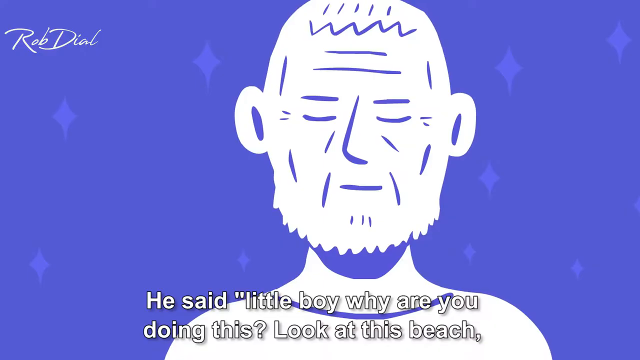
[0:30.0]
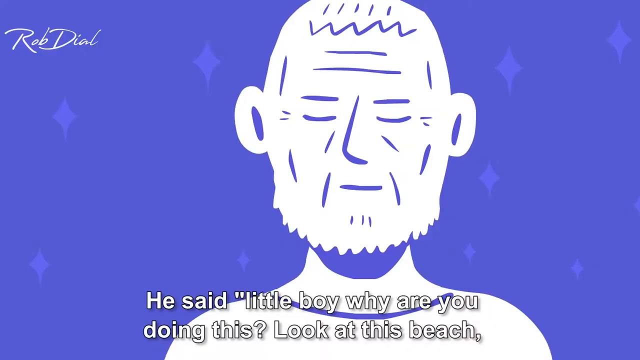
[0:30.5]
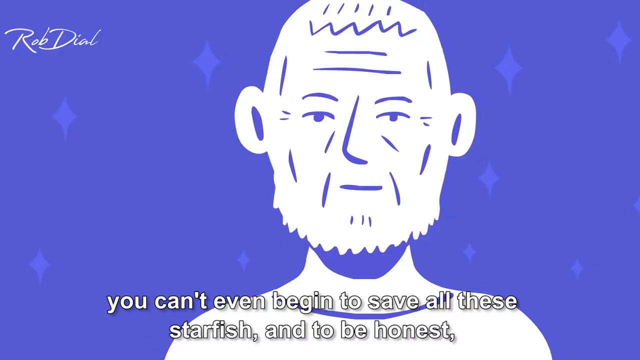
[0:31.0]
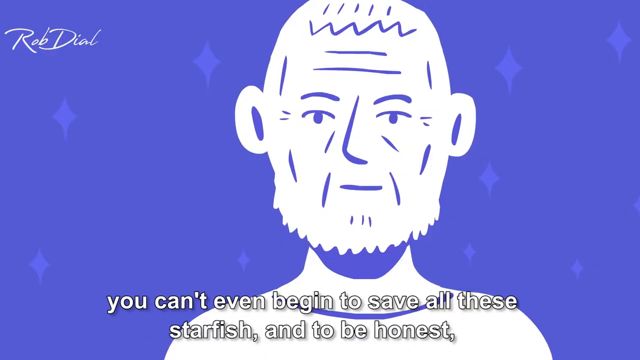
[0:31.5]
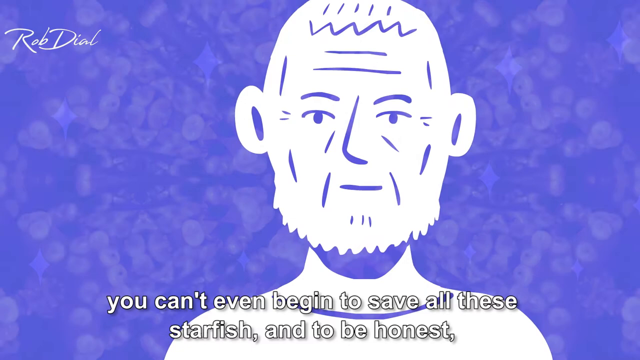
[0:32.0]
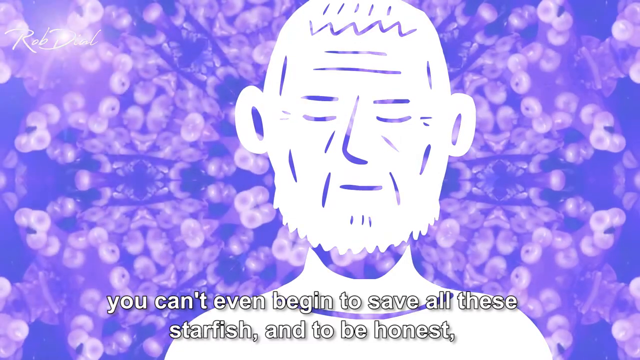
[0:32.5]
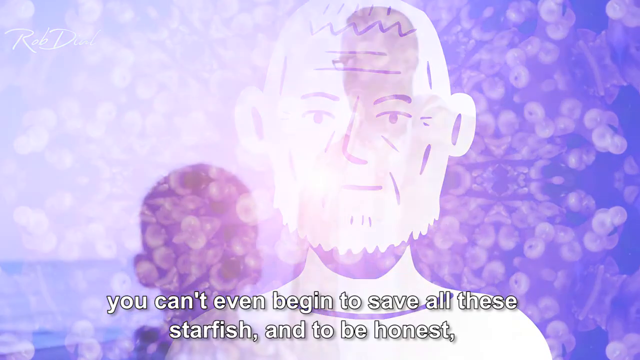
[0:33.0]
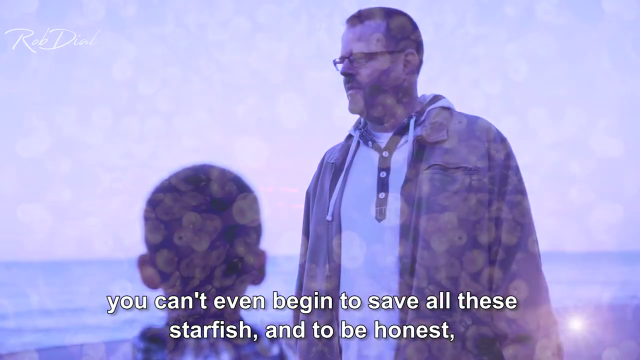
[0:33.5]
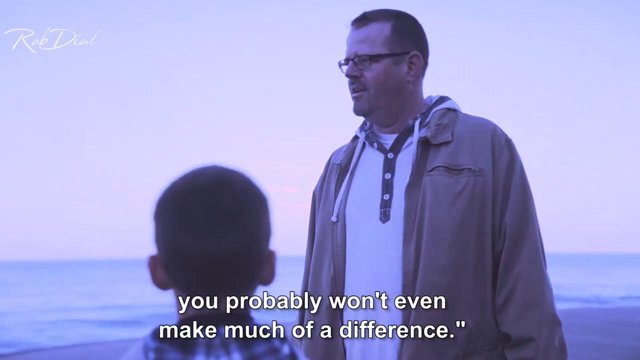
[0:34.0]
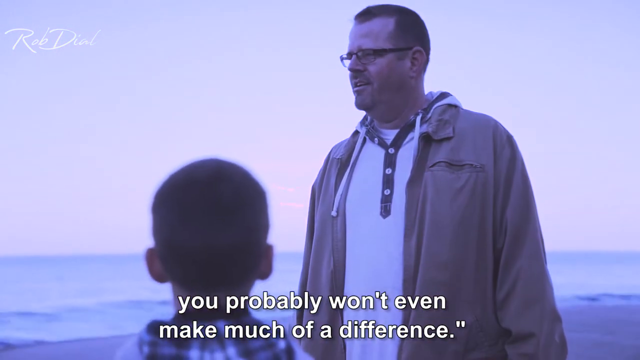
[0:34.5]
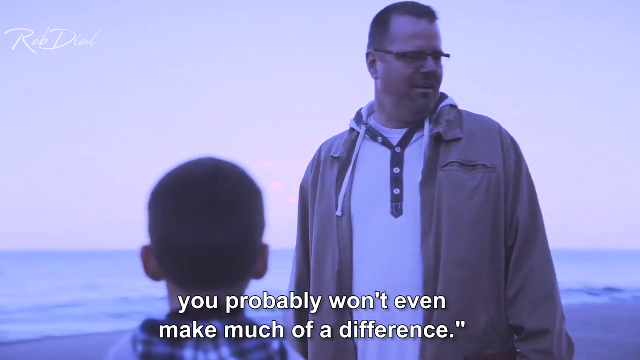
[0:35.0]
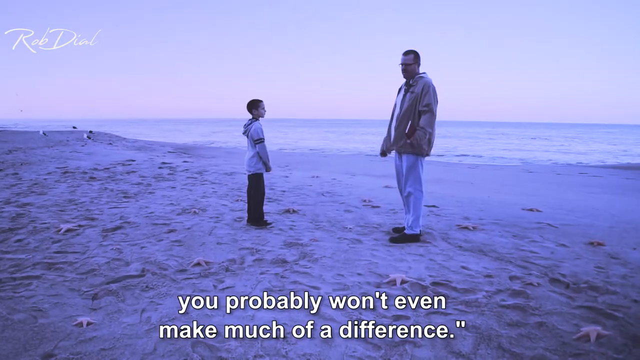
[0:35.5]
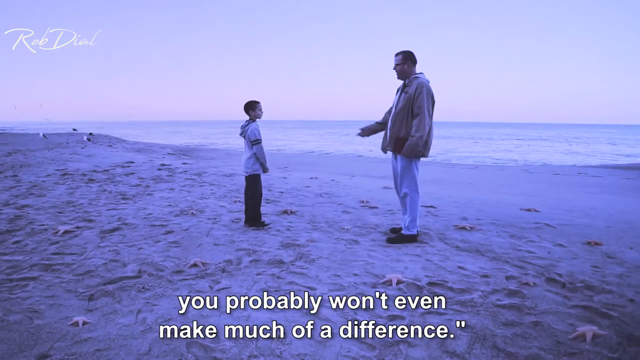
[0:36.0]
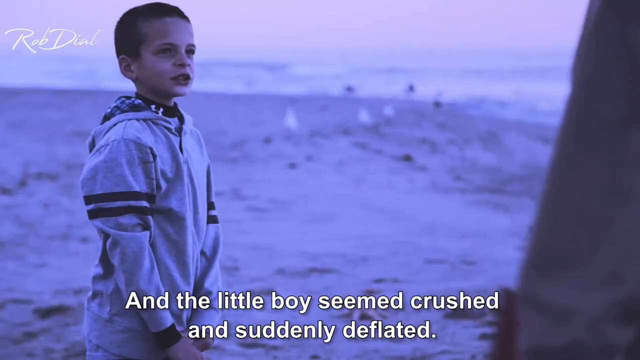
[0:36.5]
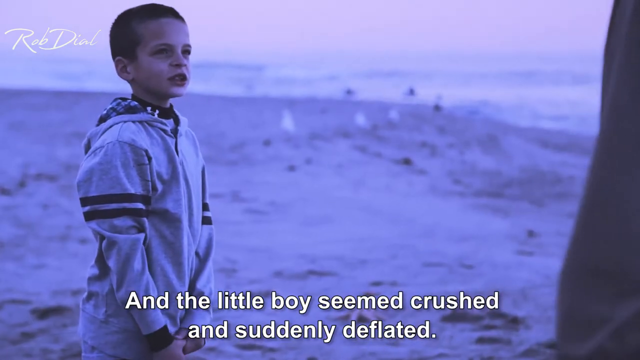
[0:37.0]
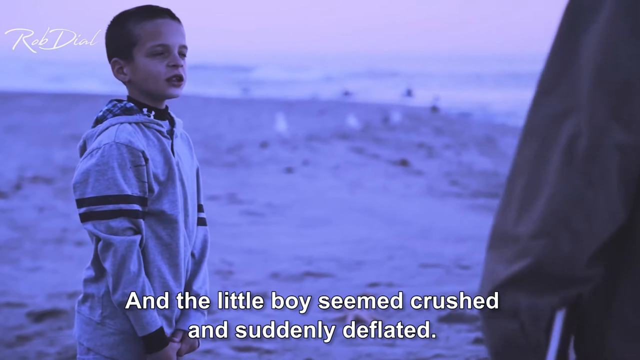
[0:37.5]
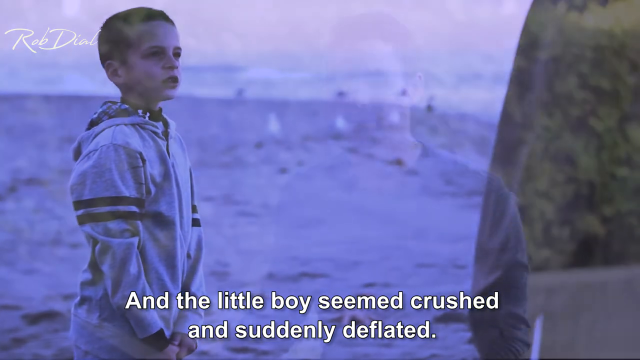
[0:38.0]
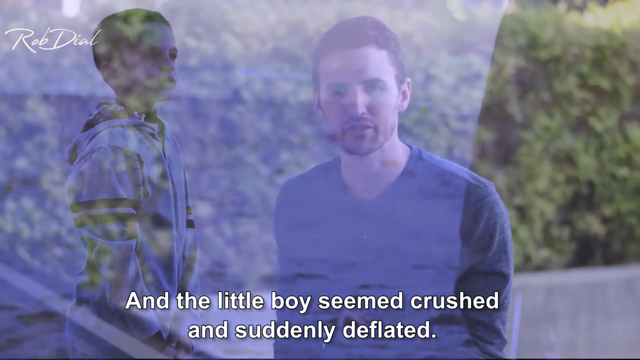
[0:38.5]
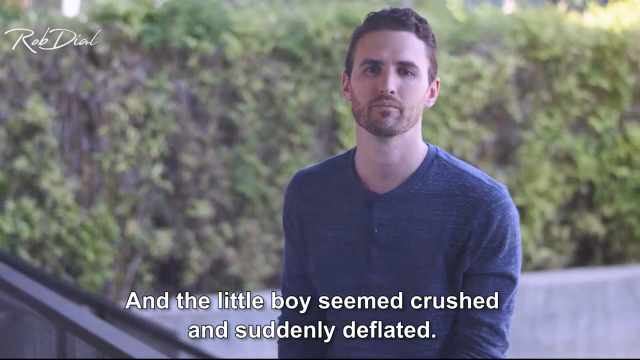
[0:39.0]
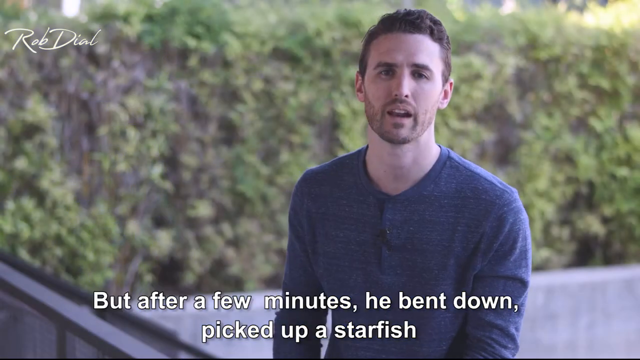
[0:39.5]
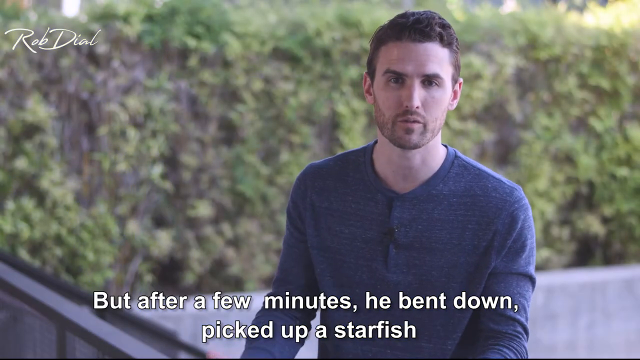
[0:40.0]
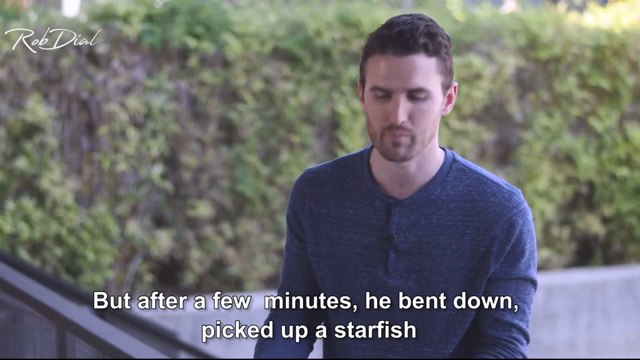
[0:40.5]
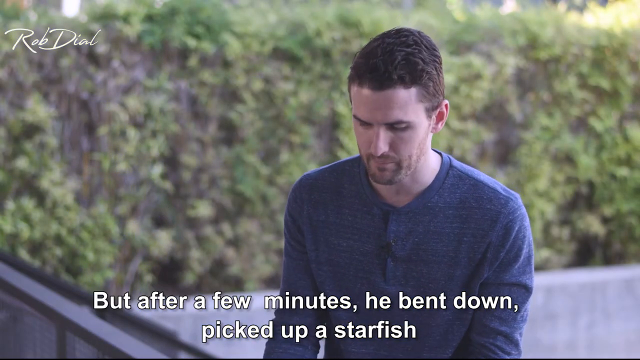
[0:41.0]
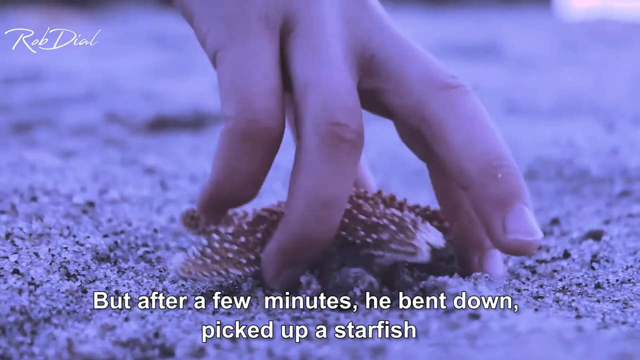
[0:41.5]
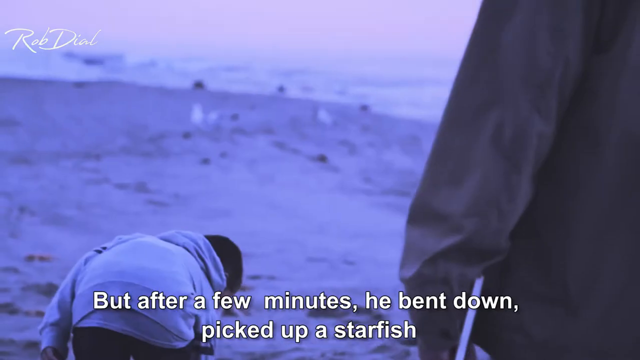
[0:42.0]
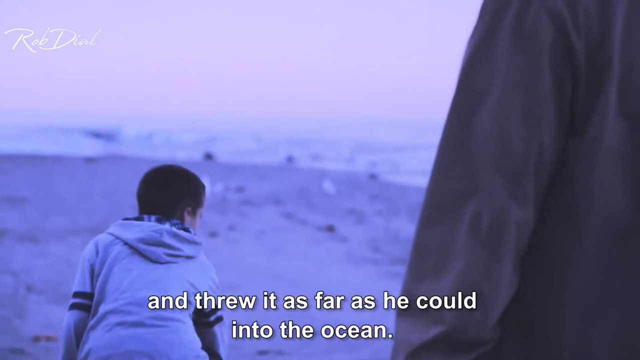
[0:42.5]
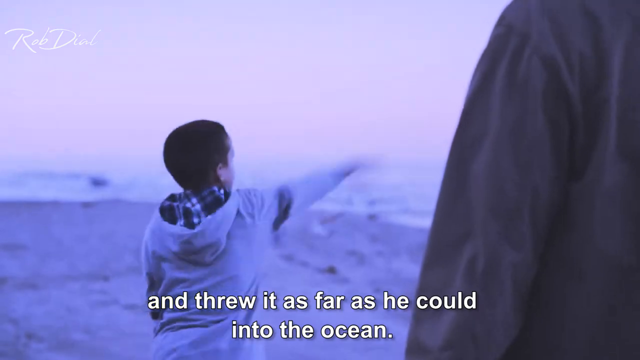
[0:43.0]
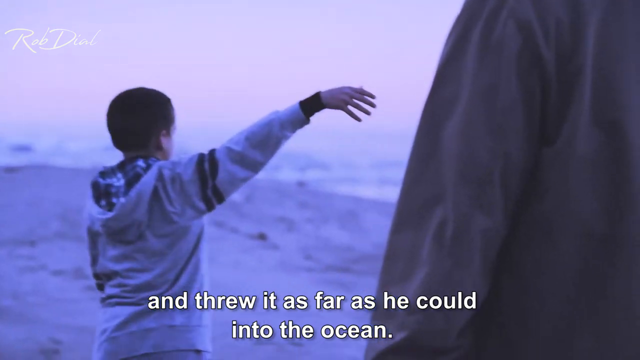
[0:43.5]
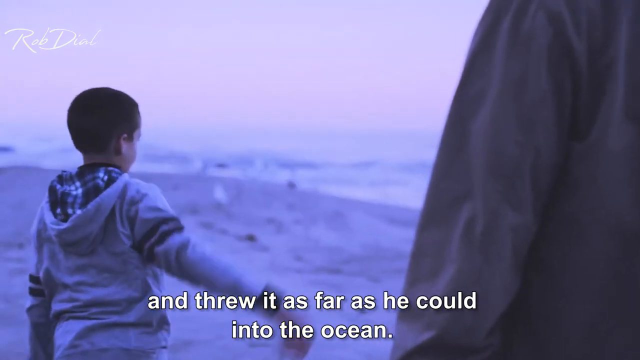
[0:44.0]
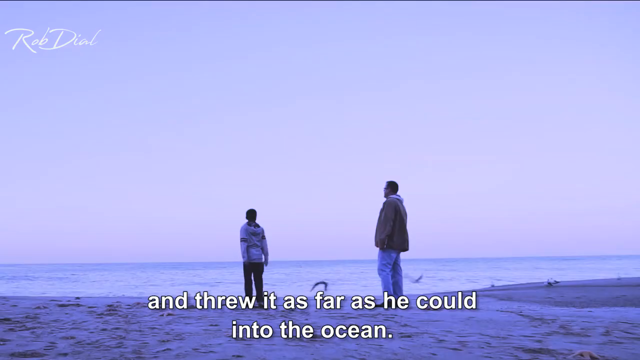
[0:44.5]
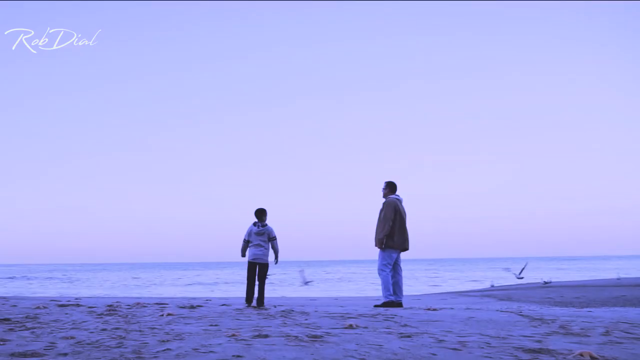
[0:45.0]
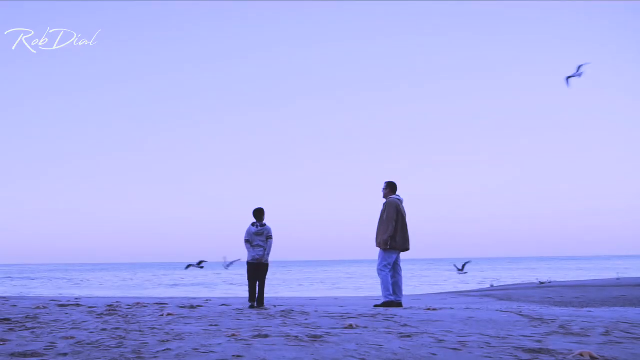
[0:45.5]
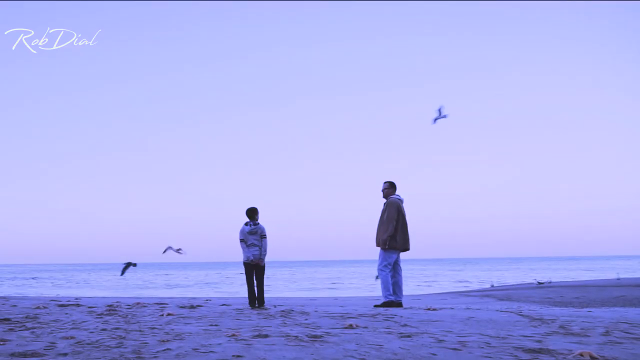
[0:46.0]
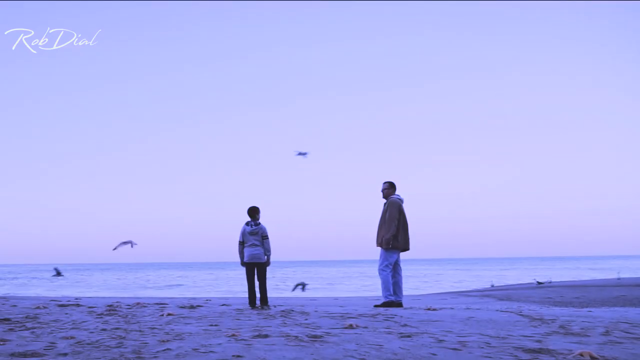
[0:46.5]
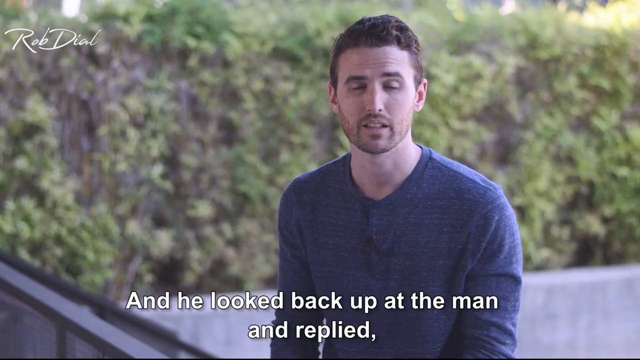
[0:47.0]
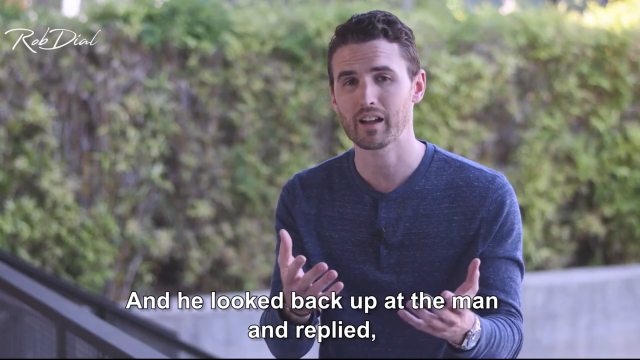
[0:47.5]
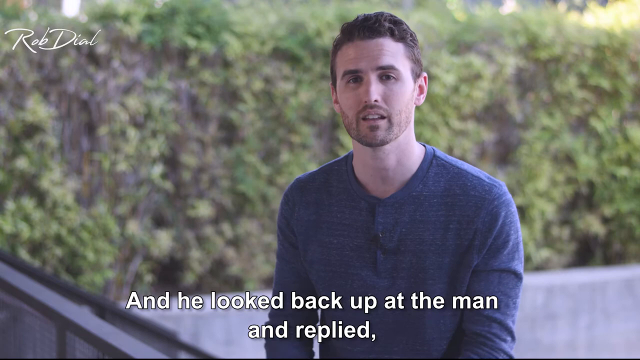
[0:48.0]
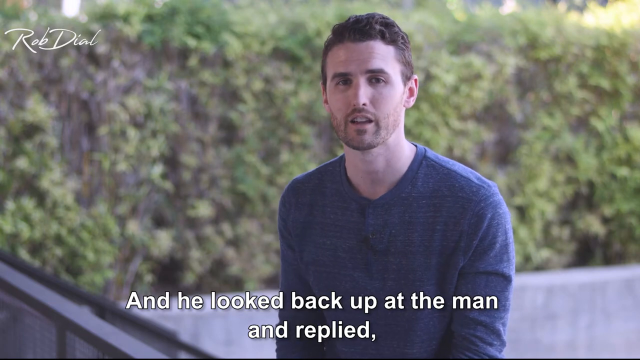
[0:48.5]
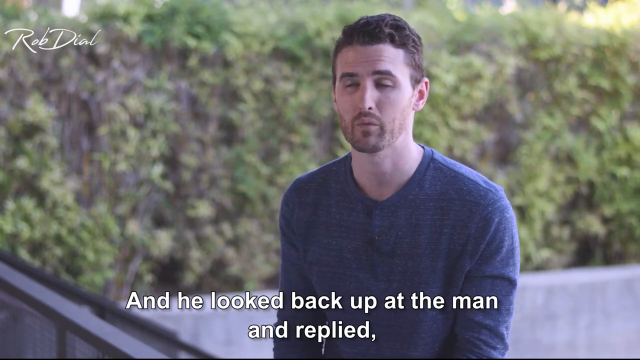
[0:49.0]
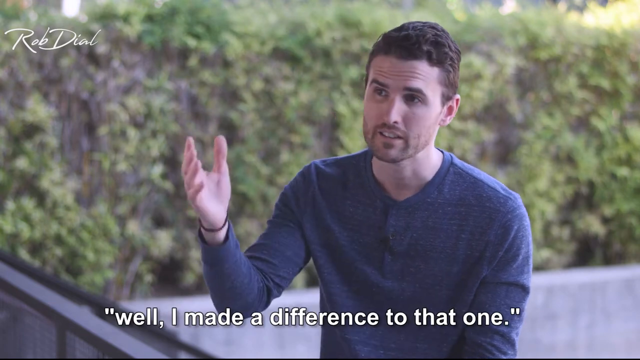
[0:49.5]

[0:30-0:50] An animation of an old man appears on screen. He blinks as he says to the little boy, "you can't even begin to save all these starfish and to be honest you probably won't even make much of a difference." The video cuts from the animation to a real boy and a man standing on the shore of an ocean, facing each other. The man speaks to the boy while gesturing with his hands, and the caption at the bottom of the screen says "and the little boy seemed crushed and suddenly deflated". The camera zooms in on the little boy, who seems disappointed. The video then cuts back to the narrator, and the caption continues: "But after a few minutes he bent down, picked up a starfish and threw it as far as he could into the ocean". A clip shows the young boy picking up the starfish and throwing it into the ocean as some birds fly over the water.